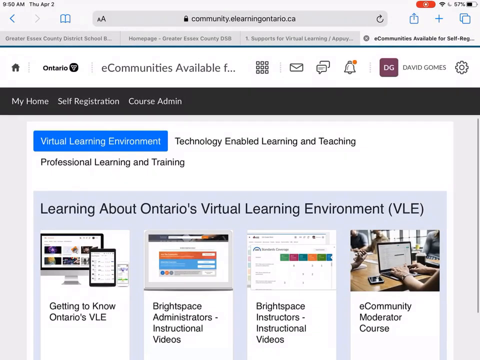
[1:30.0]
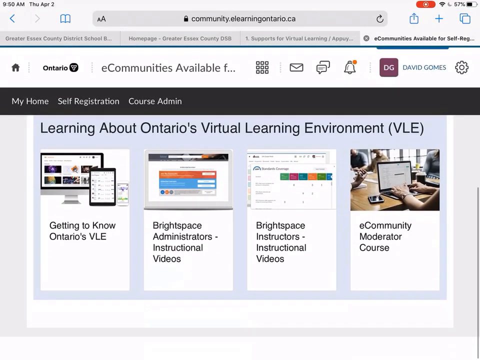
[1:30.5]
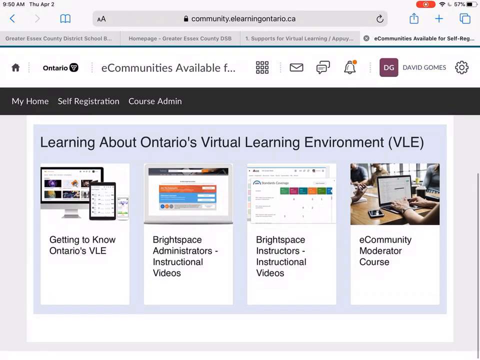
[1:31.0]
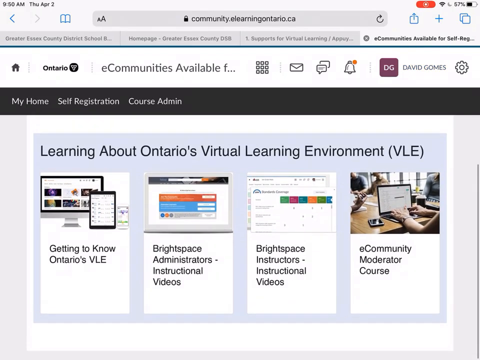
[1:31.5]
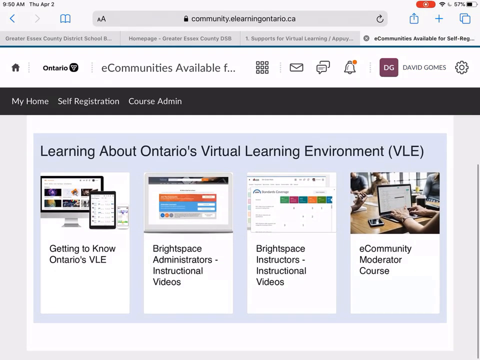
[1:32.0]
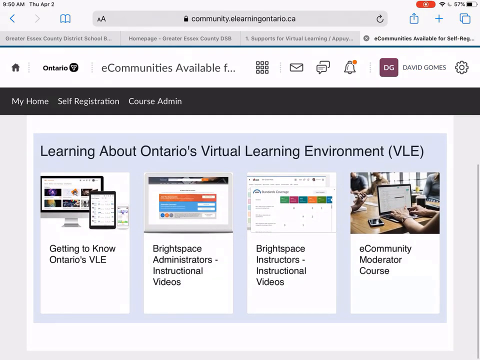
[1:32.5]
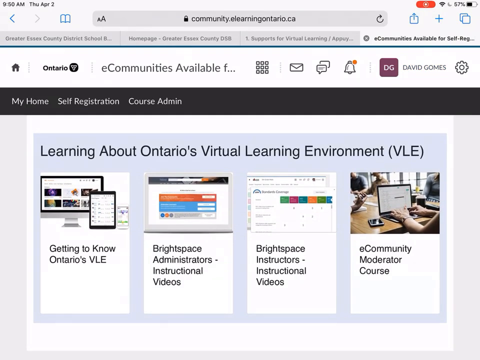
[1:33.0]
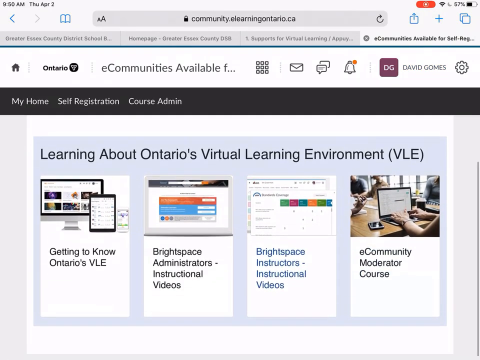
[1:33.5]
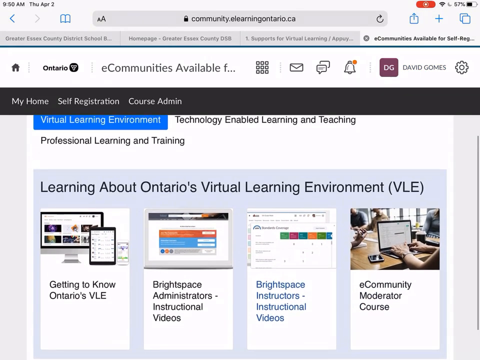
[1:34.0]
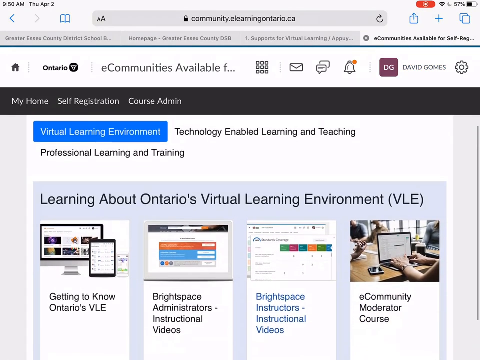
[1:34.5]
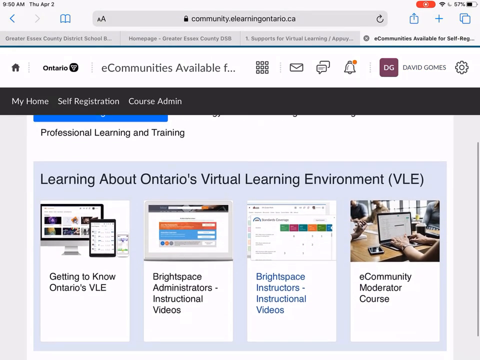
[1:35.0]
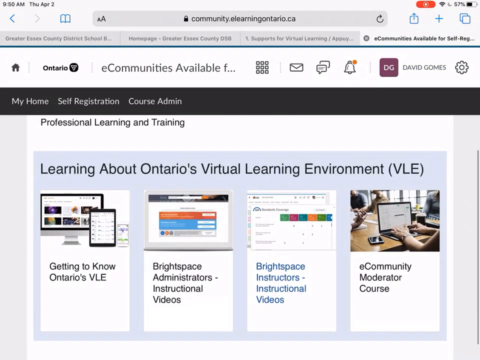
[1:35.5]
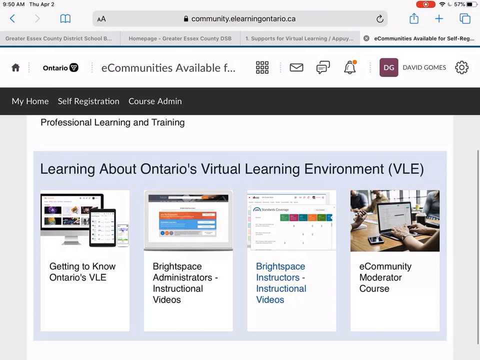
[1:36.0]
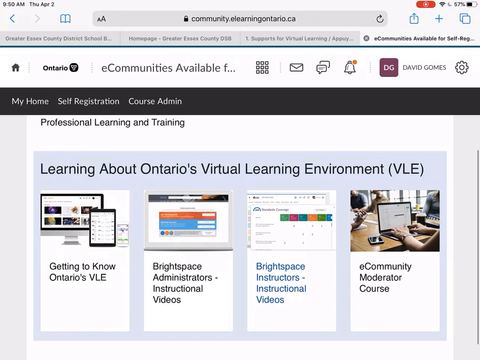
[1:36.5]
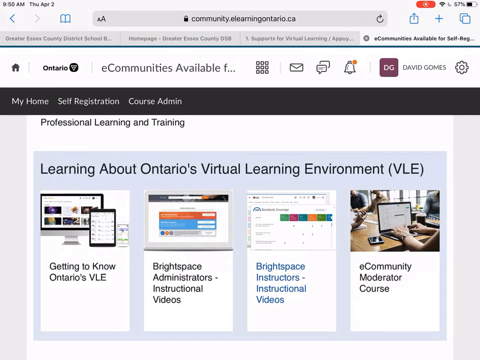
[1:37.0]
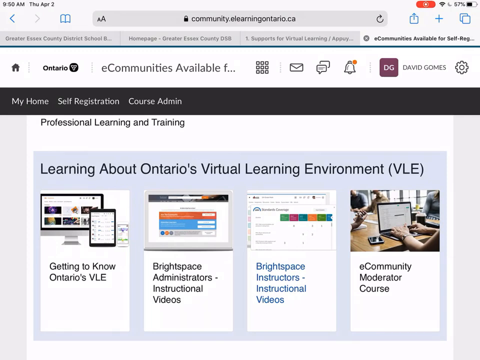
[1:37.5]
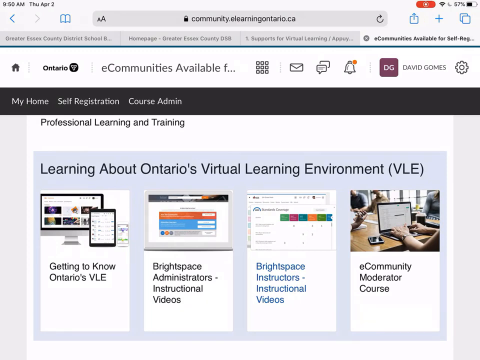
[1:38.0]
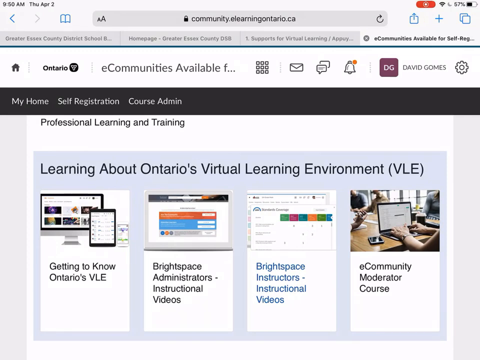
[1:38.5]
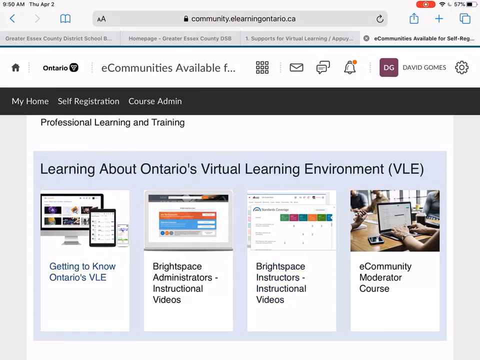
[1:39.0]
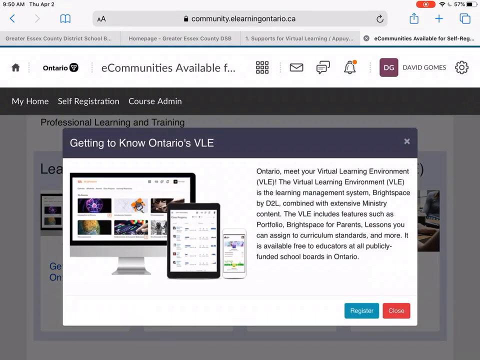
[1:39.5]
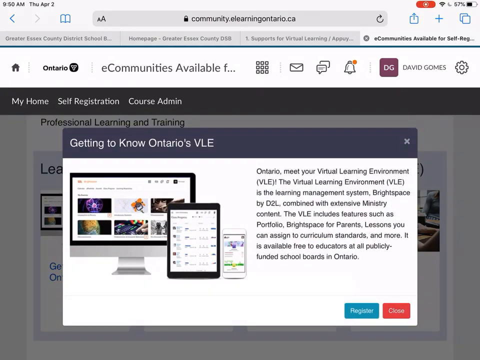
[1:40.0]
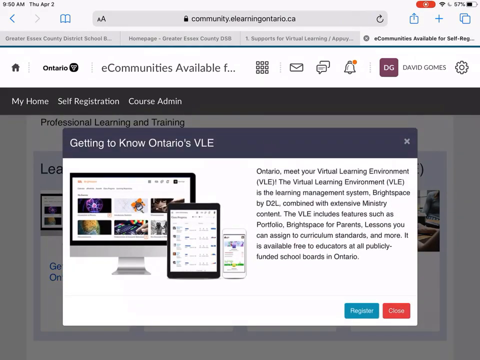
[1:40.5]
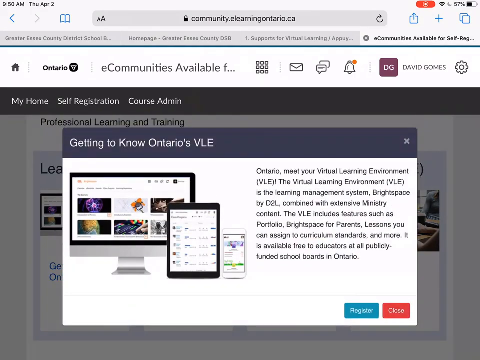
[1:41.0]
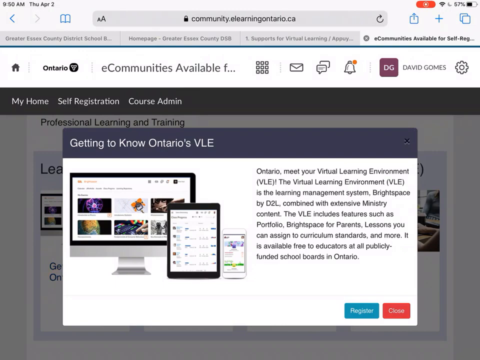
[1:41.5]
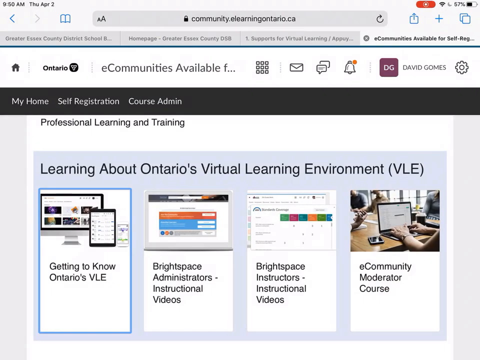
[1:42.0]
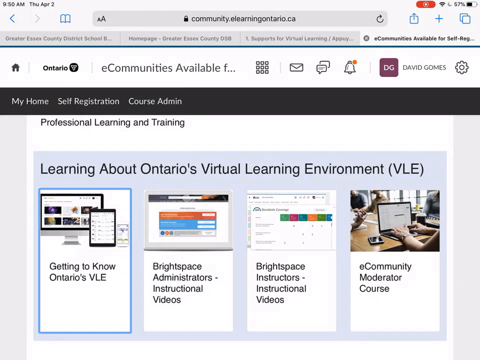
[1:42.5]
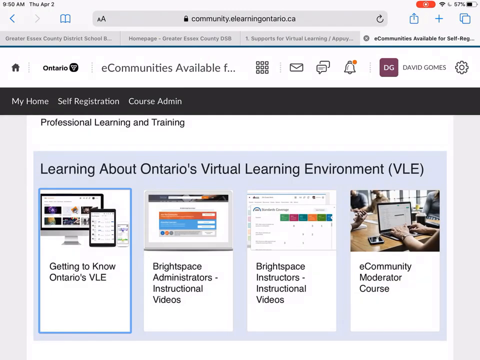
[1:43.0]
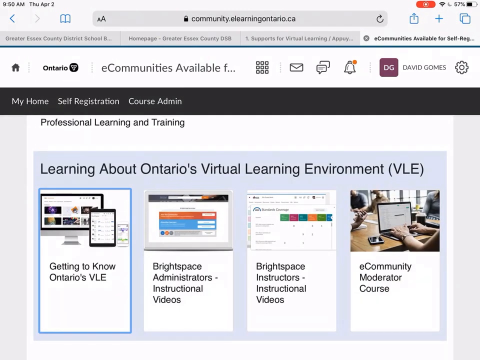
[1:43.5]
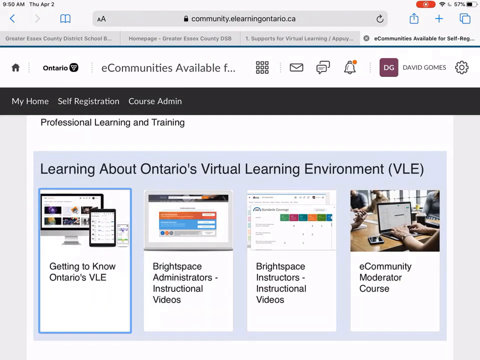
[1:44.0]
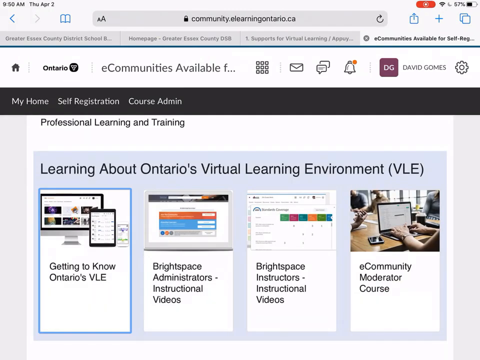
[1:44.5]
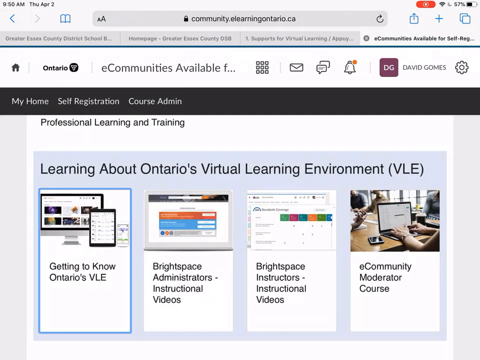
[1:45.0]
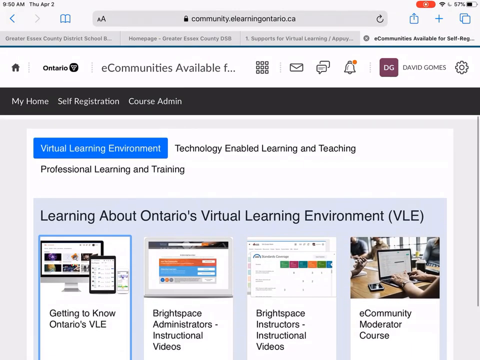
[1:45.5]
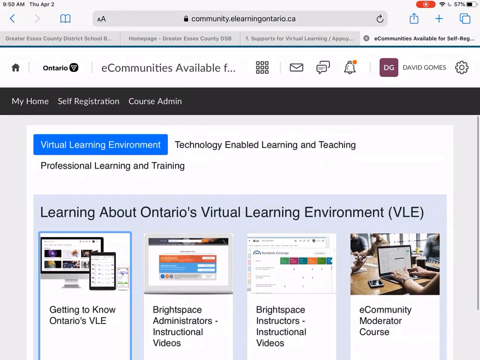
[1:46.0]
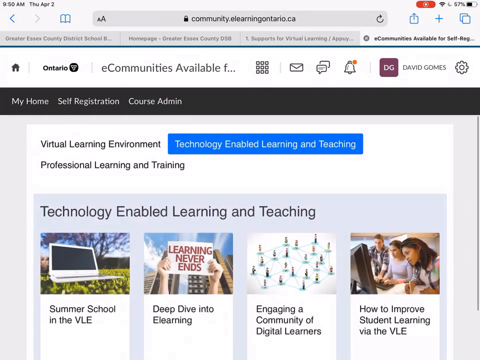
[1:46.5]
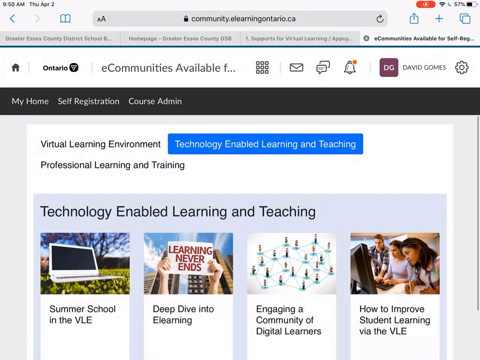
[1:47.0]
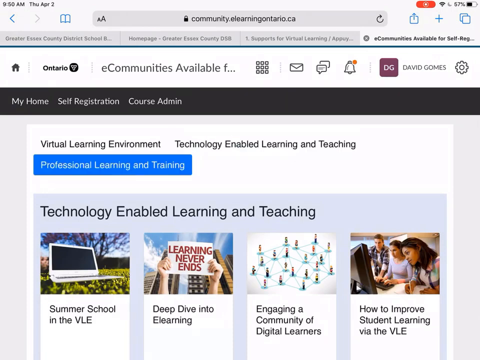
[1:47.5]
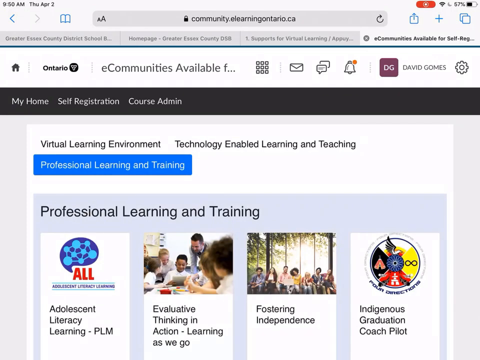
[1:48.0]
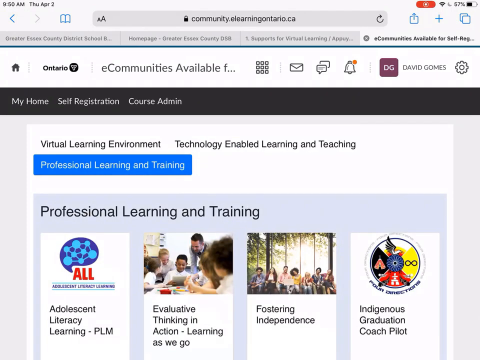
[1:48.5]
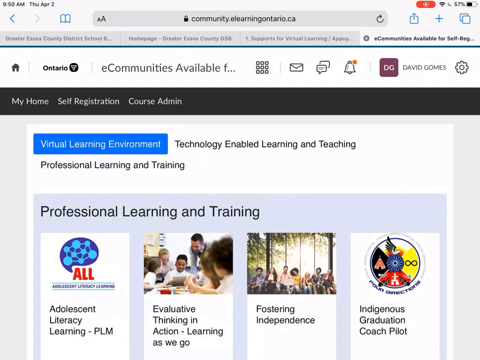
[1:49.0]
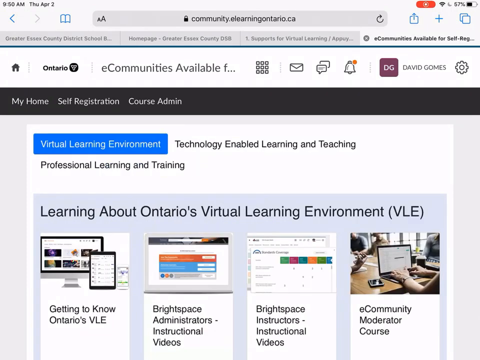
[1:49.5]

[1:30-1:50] The web page of community eLearningOntario.ca is shown. In the middle of the page a blue bar reads "Virtual Learning Environment," next to it "Technology Enabled Learning and Teaching," and a line below "Professional Learning and Training." In a gray background box below that it reads "Learning about Ontario's Virtual Learning Environment, VLE." Below are four tabs, which from left to right read "Getting to Know Ontario's VLE," "Brightspace Administrators Instructional Videos," "Brightspace Instructors Instructional Videos," and "eCommunity Moderator Course," each topped by an illustration of a computer or a computer page. Then the "Getting to Know Ontario's VLE" item is shown: on the right-hand side is a picture of a computer screen and an iPad, and the text reads "meet your Virtual Learning Environment, VLE. The Virtual Learning Environment, VLE, is a learning management system, Brightspace by D2L, combined with extensive ministry content. The VLE includes features such as Portfolio, Brightspace for Parents, lessons you can assign to curriculum standards, and more. It is available free to educators and all publicly funded school boards in Ontario." Below are two buttons, "Register" in blue and "Close" in red. That disappears and the original screen returns. The person then flips to the tab reading "Professional Learning and Training" at the top in blue.